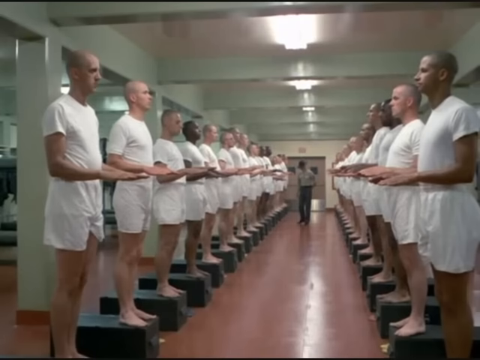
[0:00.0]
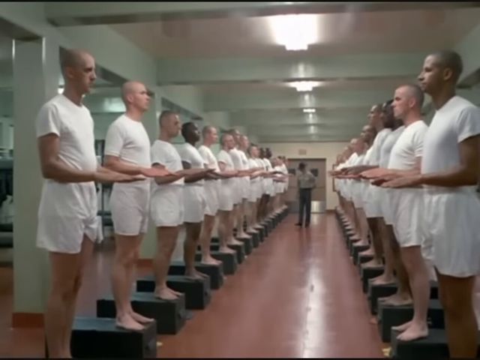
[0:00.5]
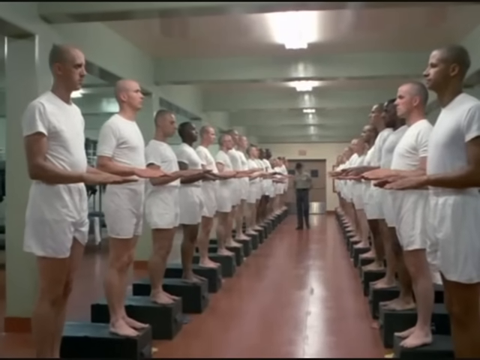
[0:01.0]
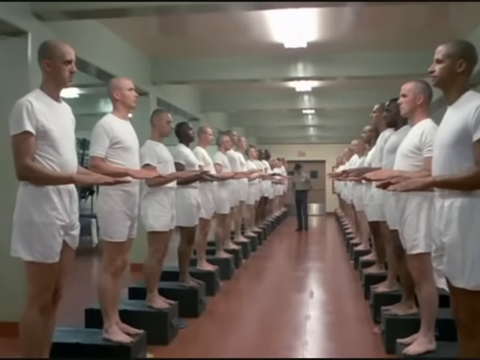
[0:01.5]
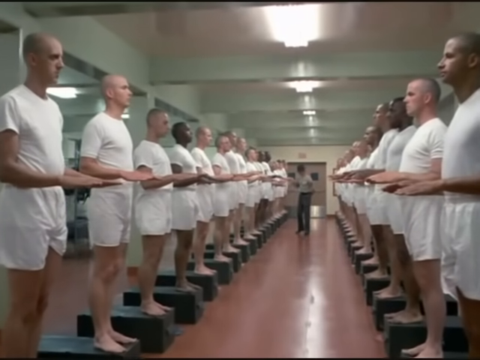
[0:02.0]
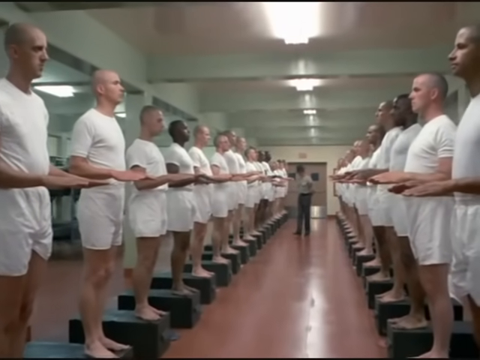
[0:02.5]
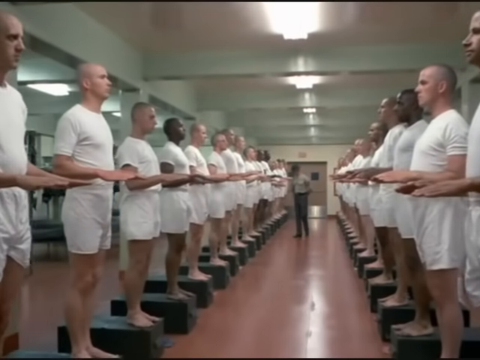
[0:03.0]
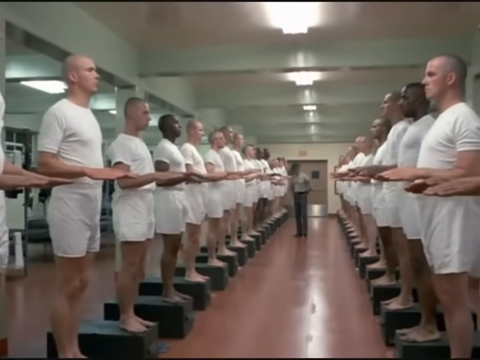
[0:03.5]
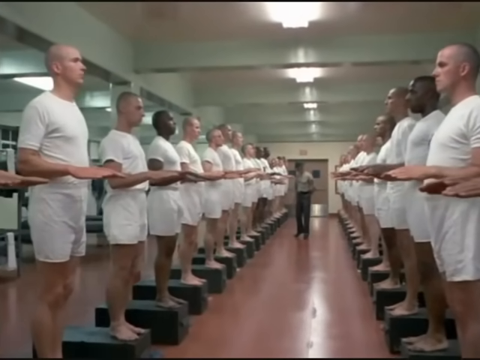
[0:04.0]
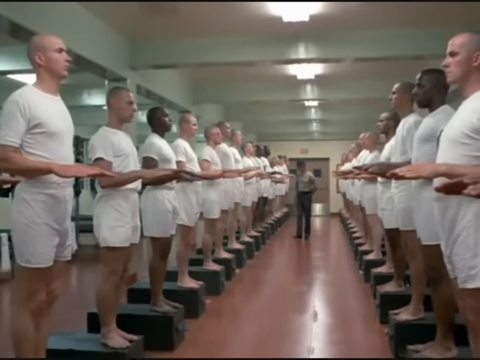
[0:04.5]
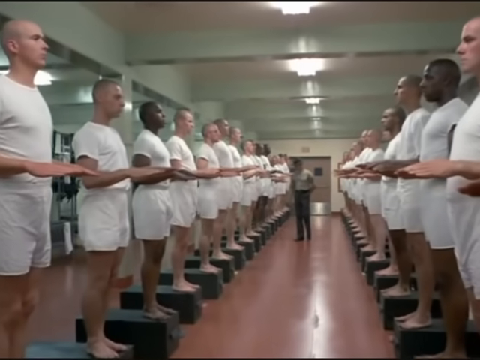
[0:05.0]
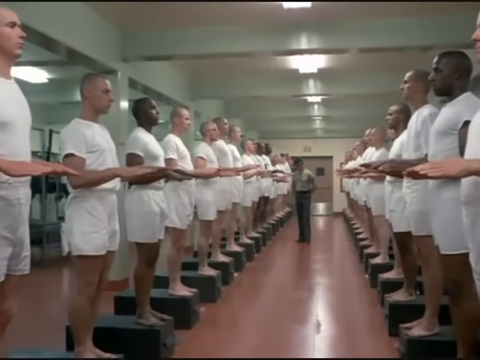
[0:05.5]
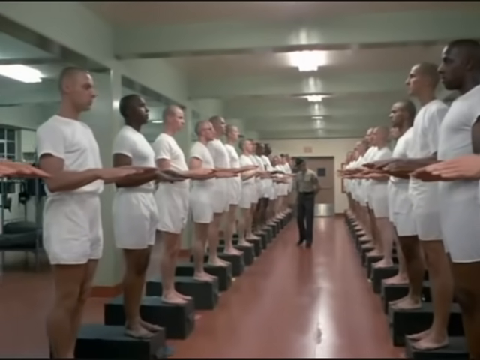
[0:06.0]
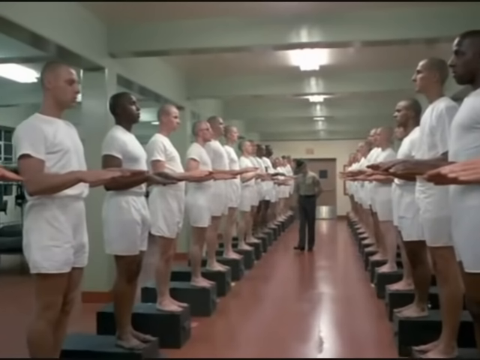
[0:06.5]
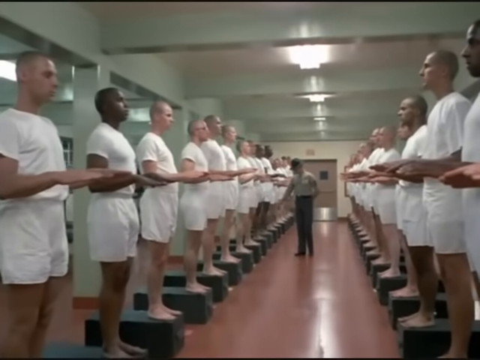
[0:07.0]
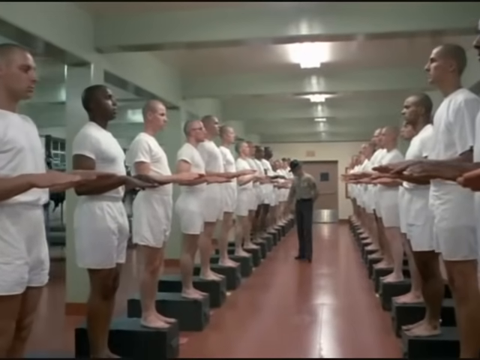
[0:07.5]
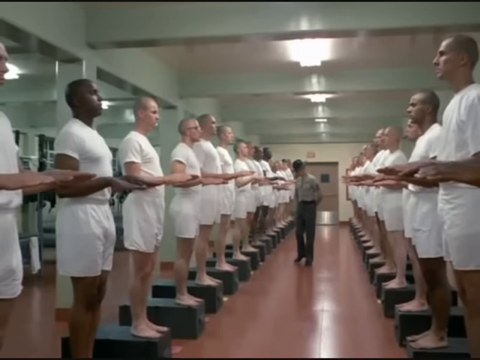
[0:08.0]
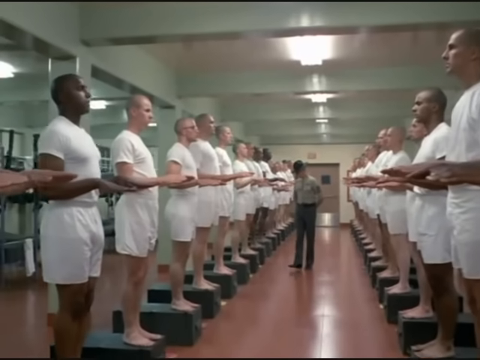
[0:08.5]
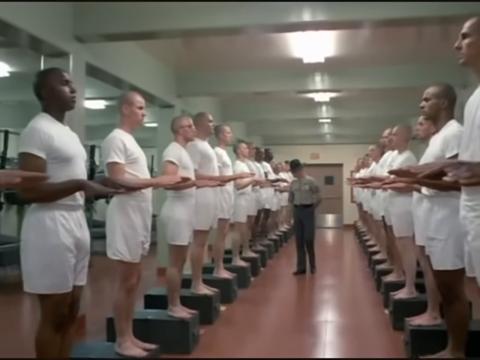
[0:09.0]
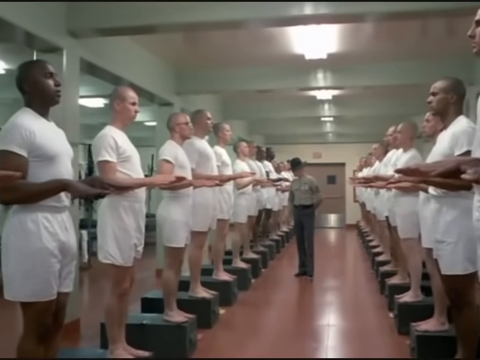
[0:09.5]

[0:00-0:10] Multiple men wearing white shorts and white short-sleeve t-shirts stand on top of foot lockers that are set sideways, all painted green. They are in a barracks room, on either side of a long aisle, with their hands placed in front of them, elbows bent and palms facing the ground. All of the men are bald. Coming down the aisle is a man in a military uniform and a campaign hat reminiscent of drill sergeants. He looks at the hands as he walks down, inspecting them, and hits a person's hand about five people down on the left side.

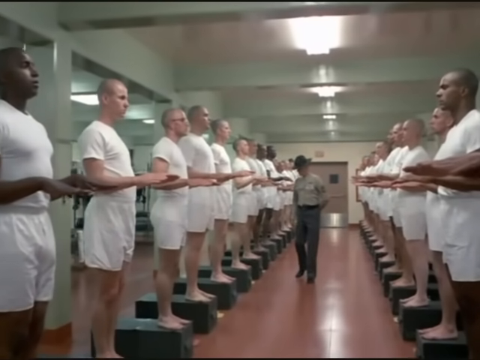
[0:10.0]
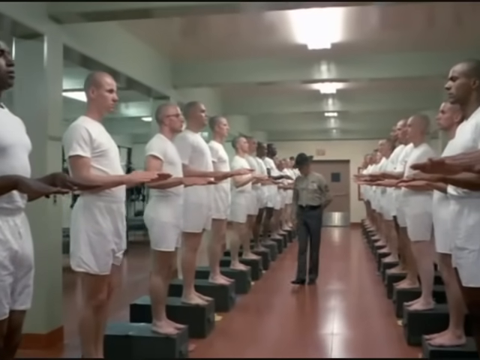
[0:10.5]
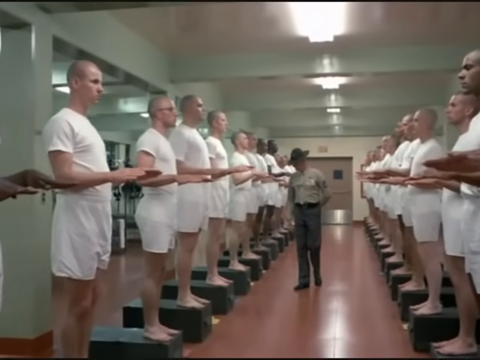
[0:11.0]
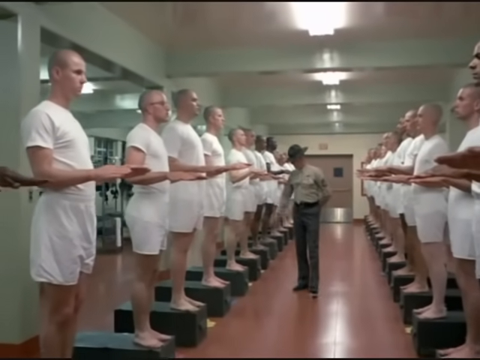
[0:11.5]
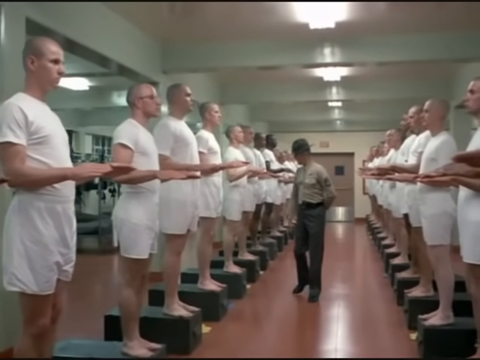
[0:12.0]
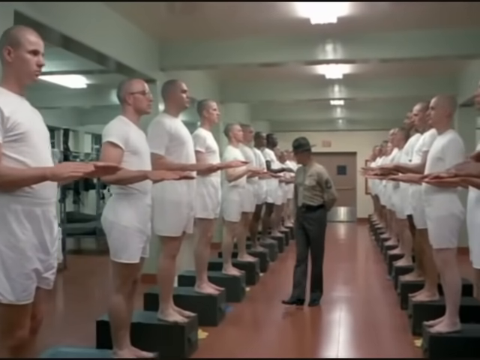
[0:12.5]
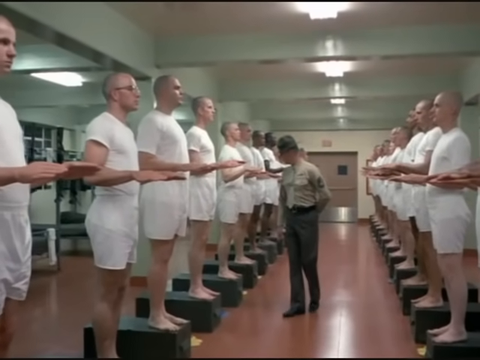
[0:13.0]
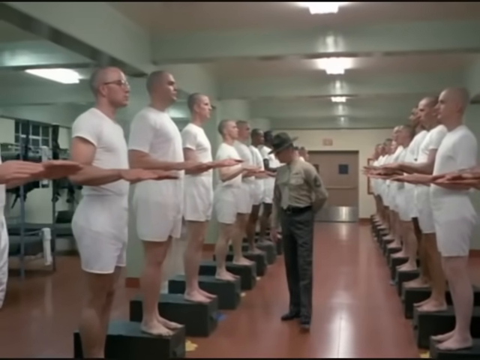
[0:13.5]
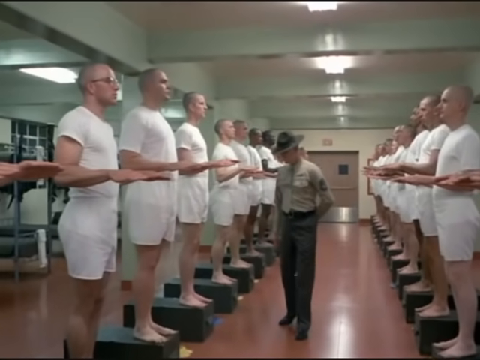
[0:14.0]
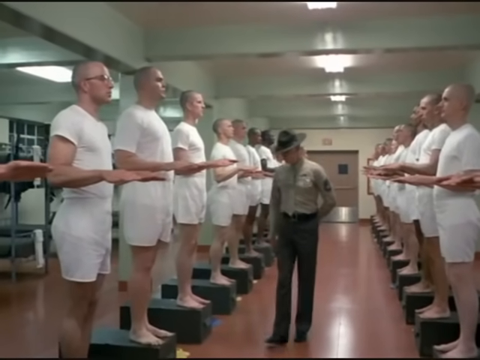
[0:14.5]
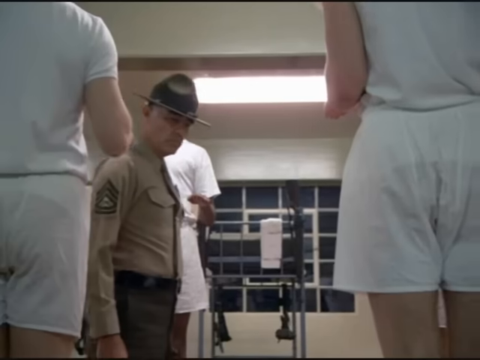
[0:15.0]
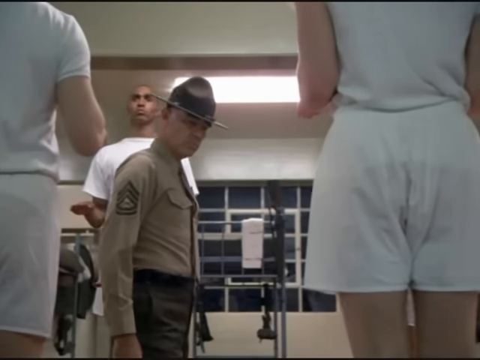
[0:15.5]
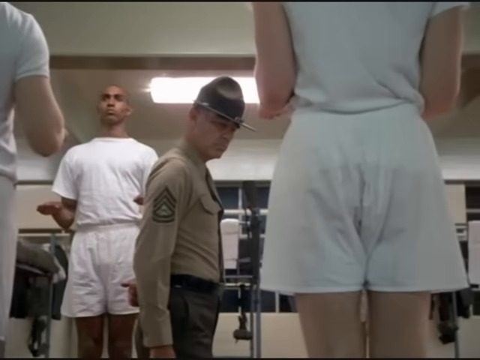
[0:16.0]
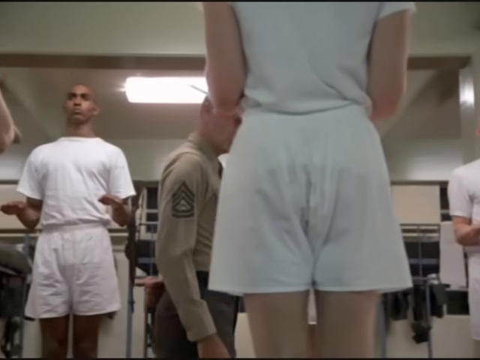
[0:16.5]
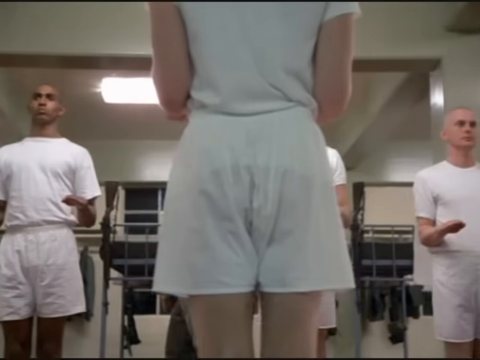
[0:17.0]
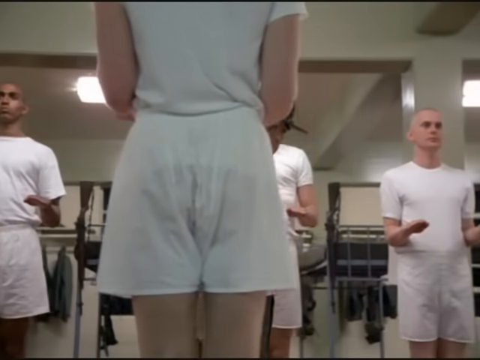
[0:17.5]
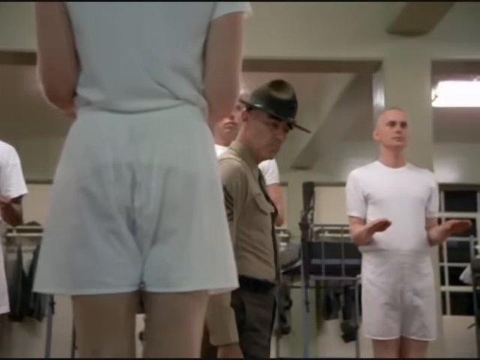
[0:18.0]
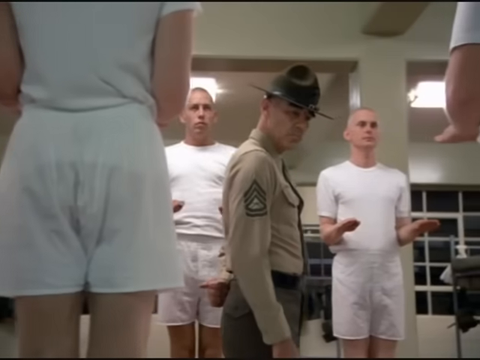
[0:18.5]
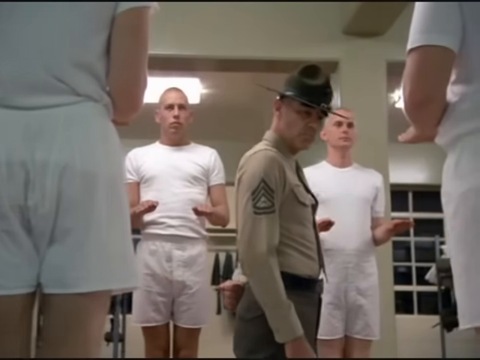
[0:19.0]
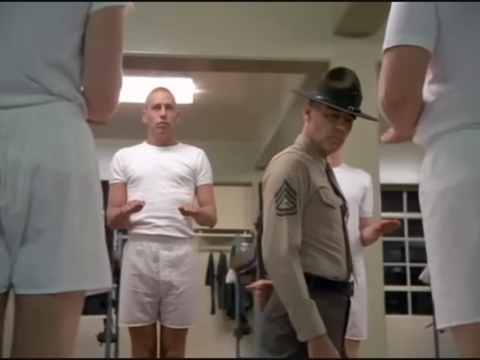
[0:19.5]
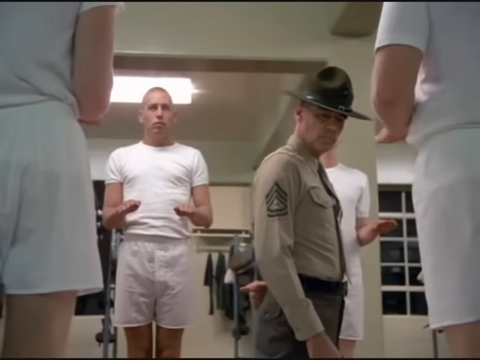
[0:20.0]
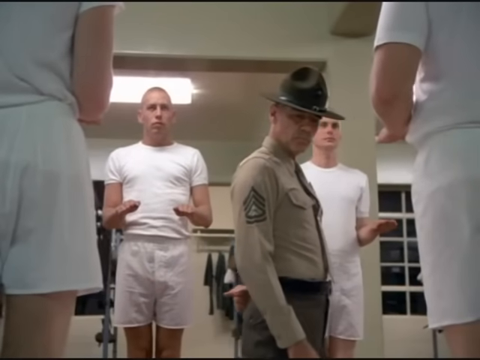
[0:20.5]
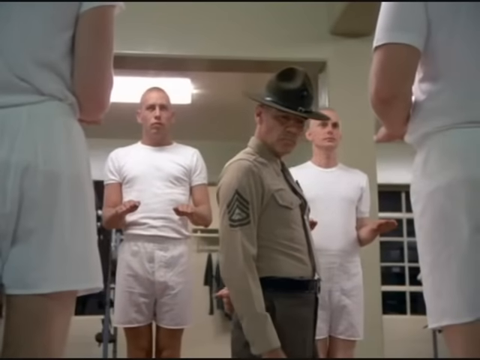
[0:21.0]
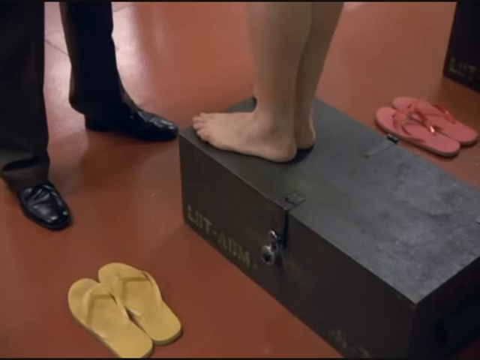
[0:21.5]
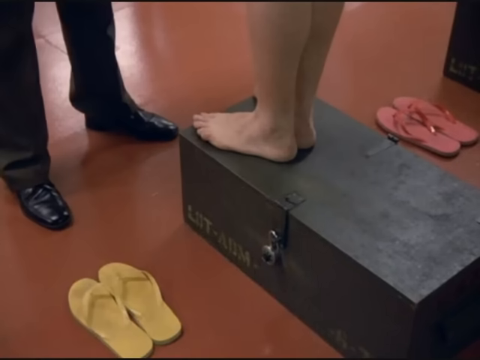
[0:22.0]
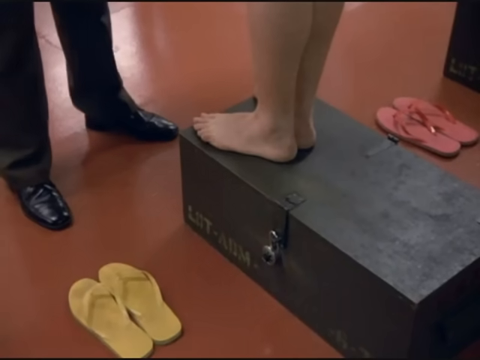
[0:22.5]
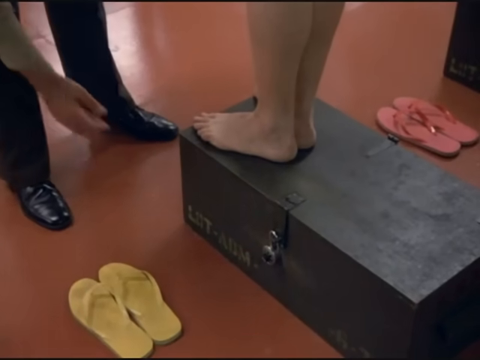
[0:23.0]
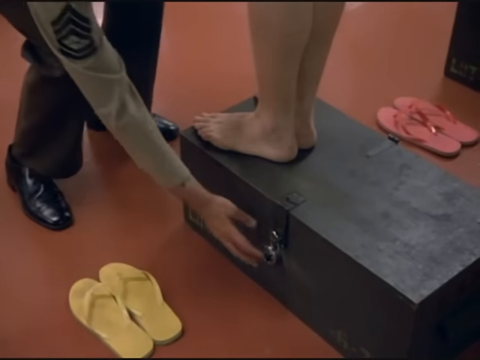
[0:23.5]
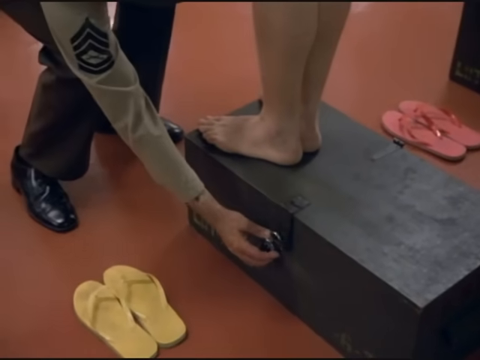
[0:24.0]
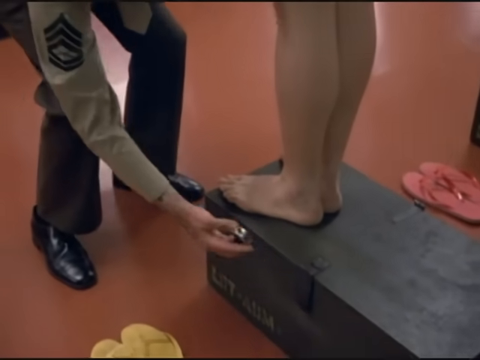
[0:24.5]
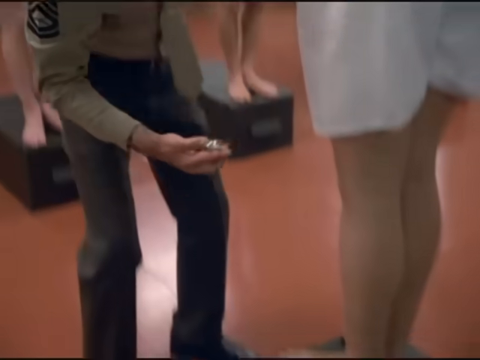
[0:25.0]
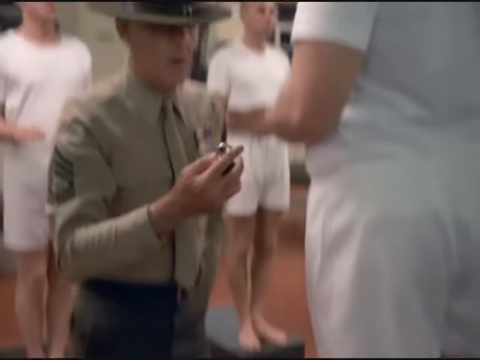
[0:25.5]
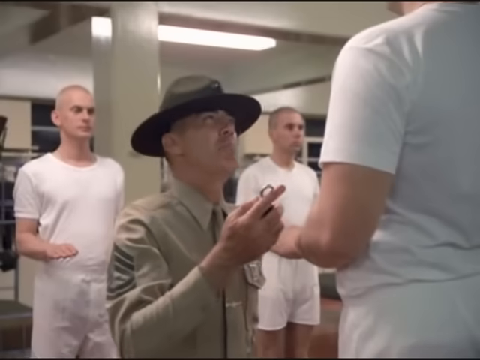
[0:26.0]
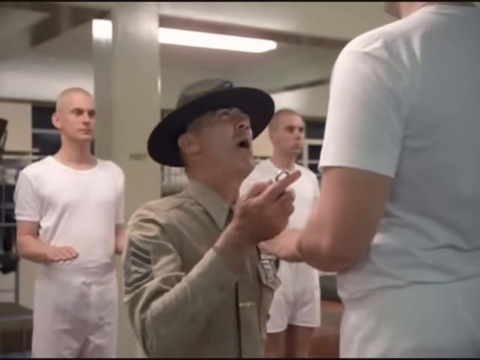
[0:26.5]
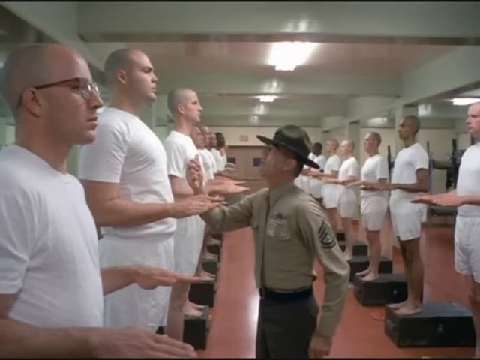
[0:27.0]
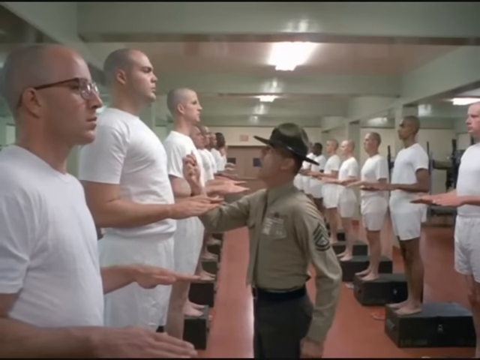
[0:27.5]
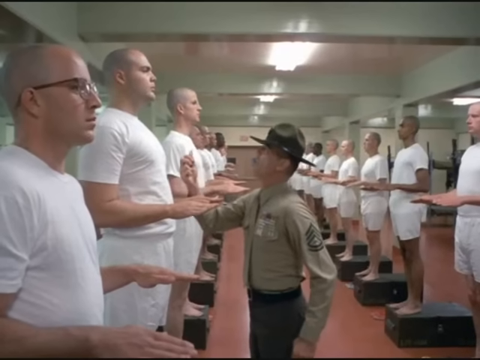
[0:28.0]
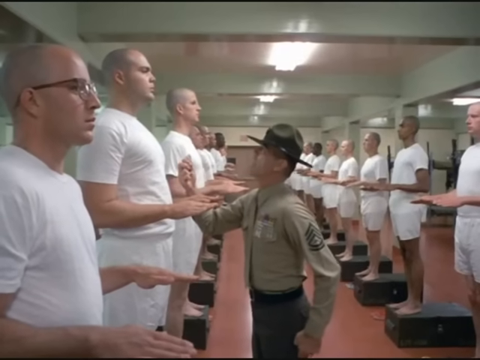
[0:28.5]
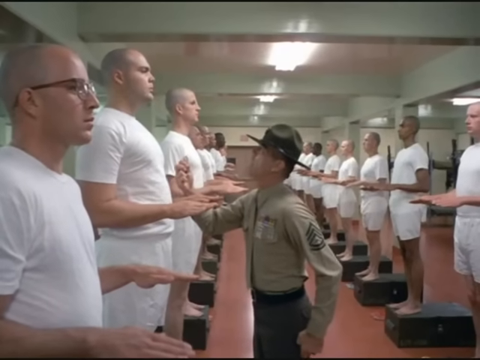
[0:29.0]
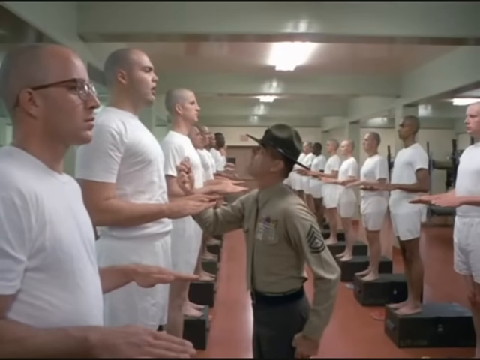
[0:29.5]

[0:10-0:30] Multiple men in white shorts and white short-sleeved t-shirts stand on top of military-grade foot lockers on either side of a long central aisle in a barracks room. Their hands are out in front of them, elbows bent, palms facing down toward the ground, and all of their heads are shaved. A man in a military uniform and a brown campaign hat reminiscent of drill sergeants comes down the aisle, looking at and inspecting their hands, starting with the left row. He points toward one of the men's feet as he continues walking. The shot cuts to a view looking from behind the men he is inspecting; he looks down seriously with his left arm behind his back. He stops at one of the men and notices that the locker underneath him has its padlock open. The camera zooms in on the padlock. The drill sergeant picks up the padlock, takes it off the footlocker, and holds it while yelling at the man standing on top of the footlocker.